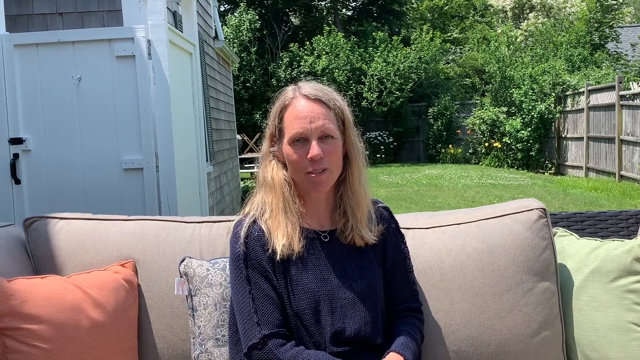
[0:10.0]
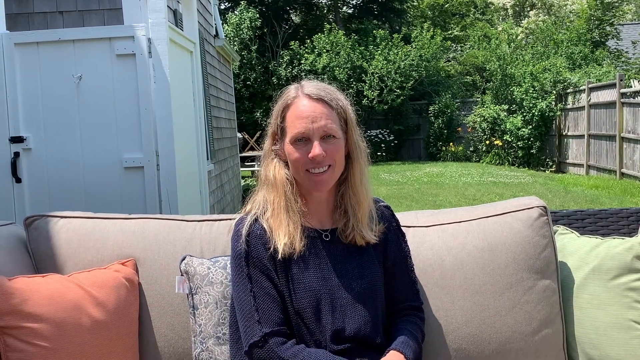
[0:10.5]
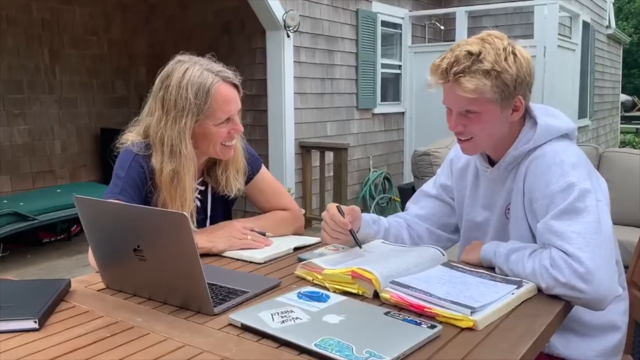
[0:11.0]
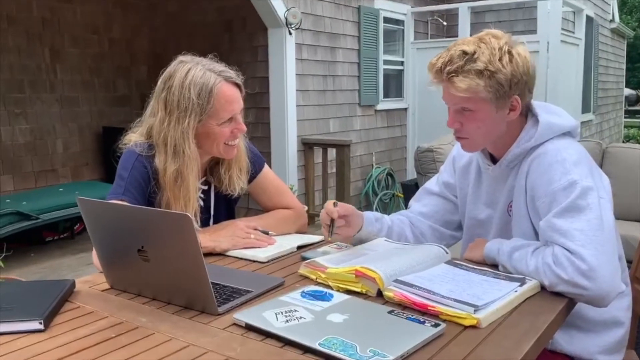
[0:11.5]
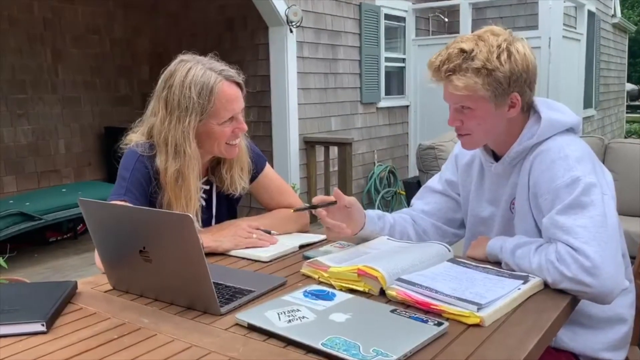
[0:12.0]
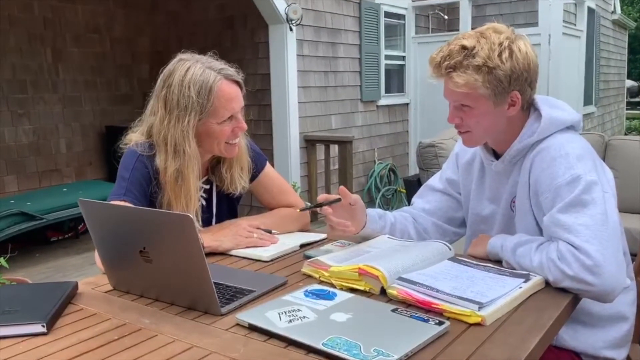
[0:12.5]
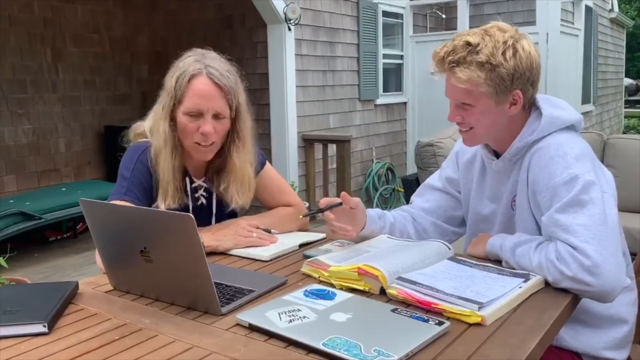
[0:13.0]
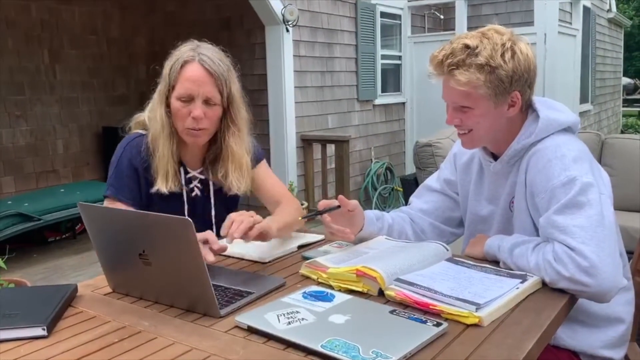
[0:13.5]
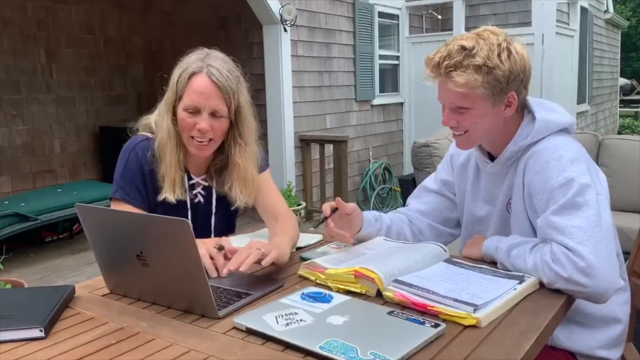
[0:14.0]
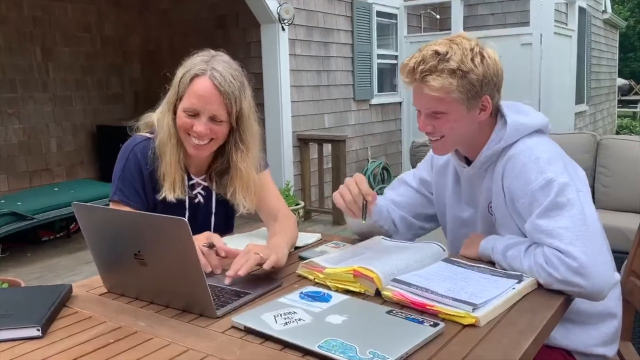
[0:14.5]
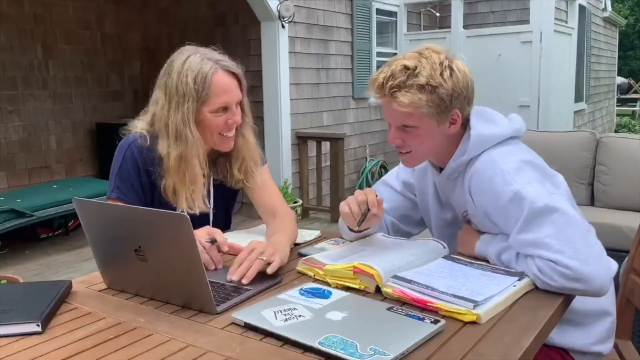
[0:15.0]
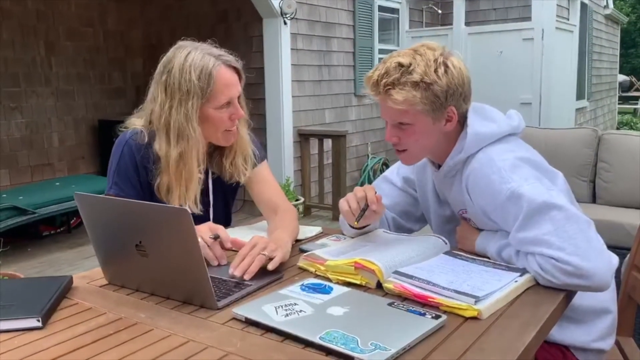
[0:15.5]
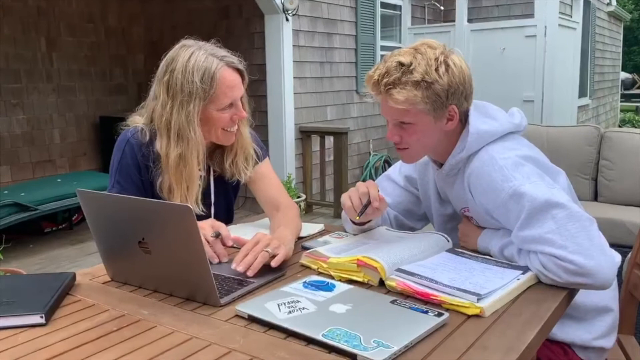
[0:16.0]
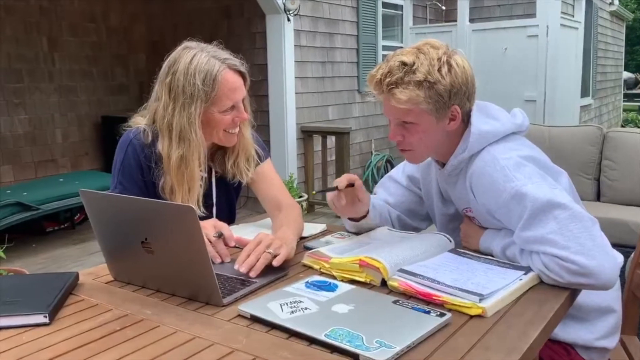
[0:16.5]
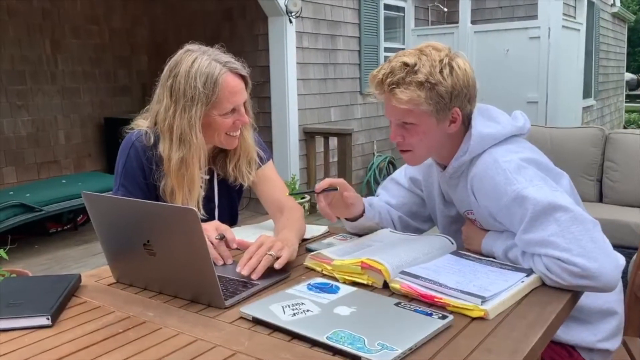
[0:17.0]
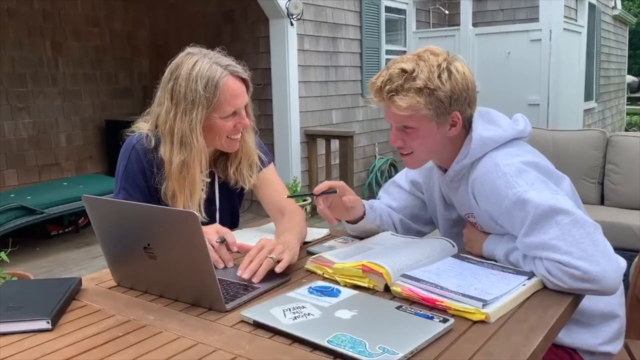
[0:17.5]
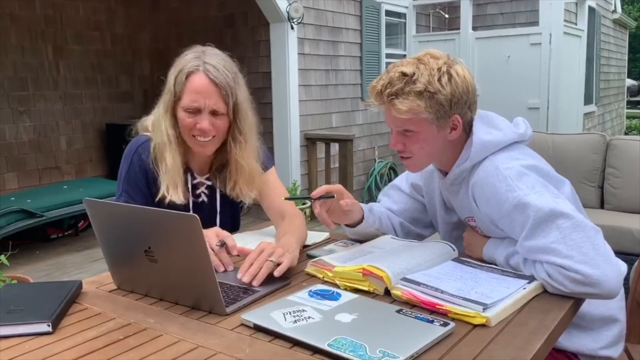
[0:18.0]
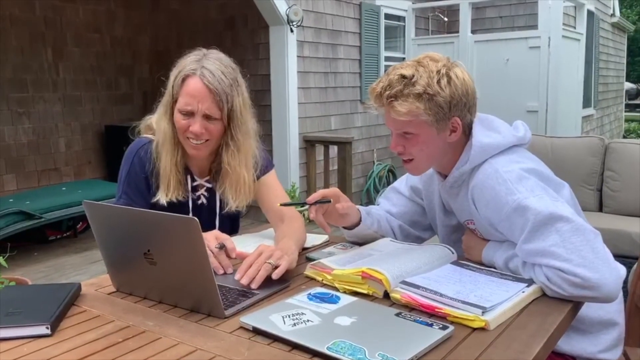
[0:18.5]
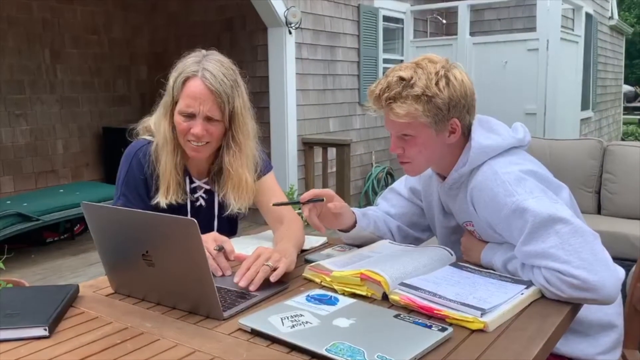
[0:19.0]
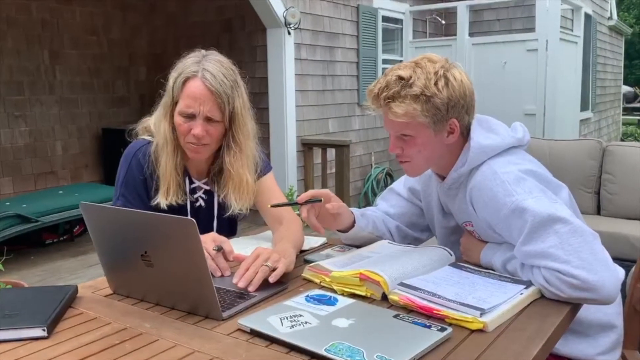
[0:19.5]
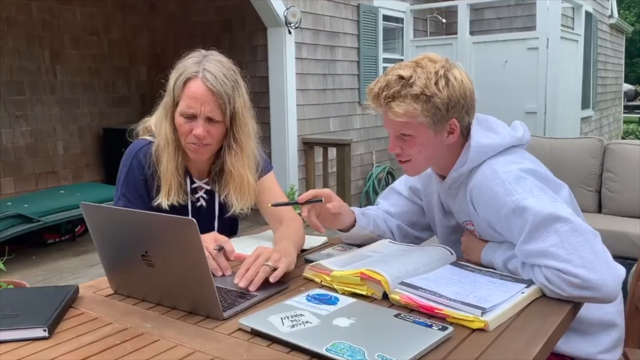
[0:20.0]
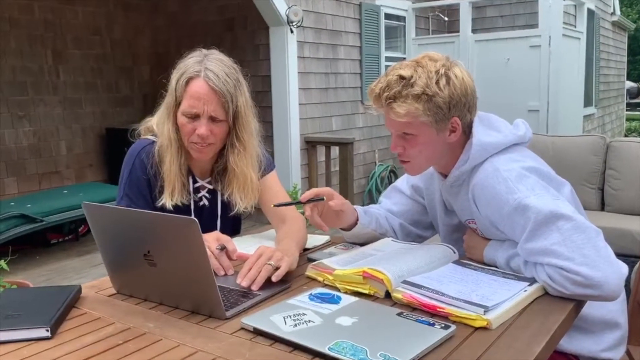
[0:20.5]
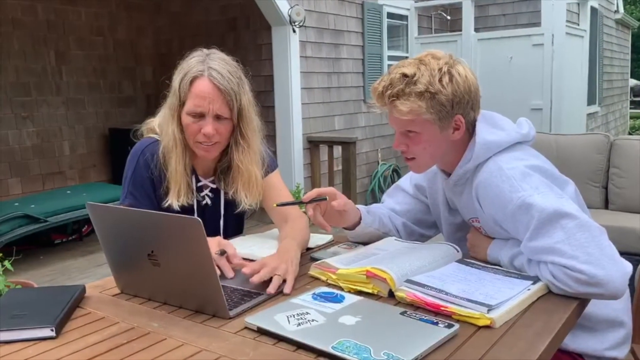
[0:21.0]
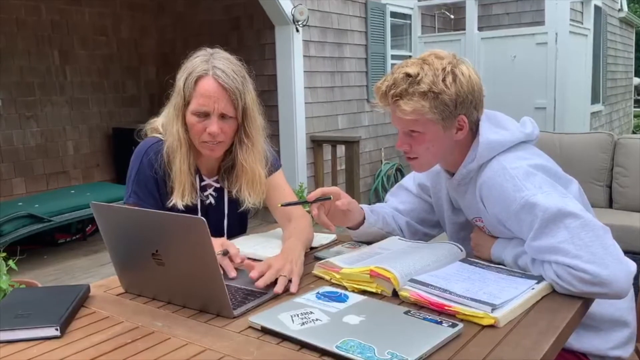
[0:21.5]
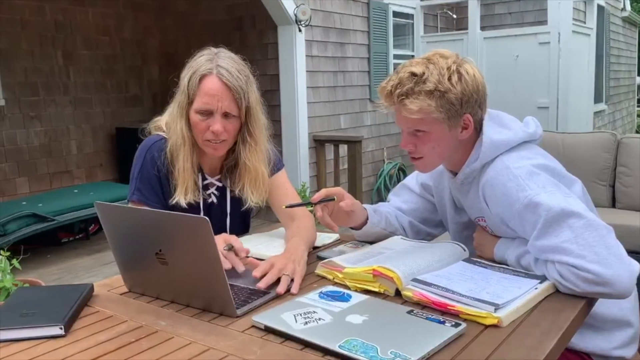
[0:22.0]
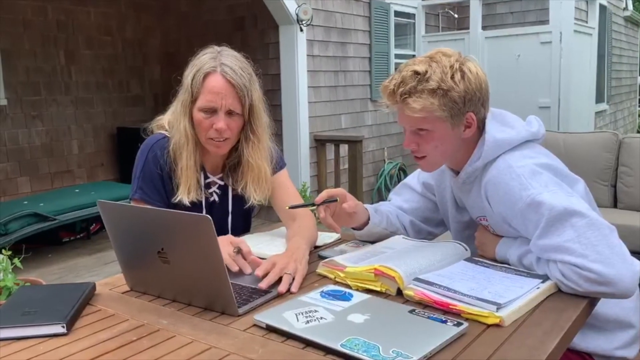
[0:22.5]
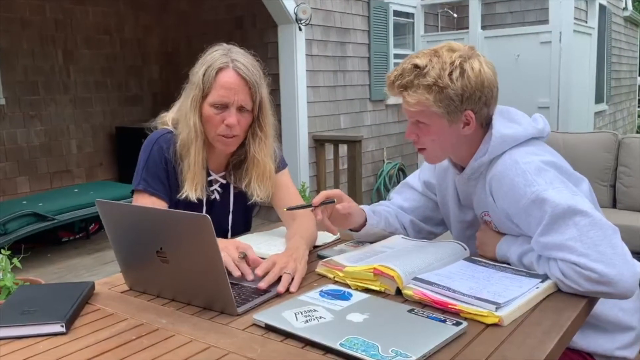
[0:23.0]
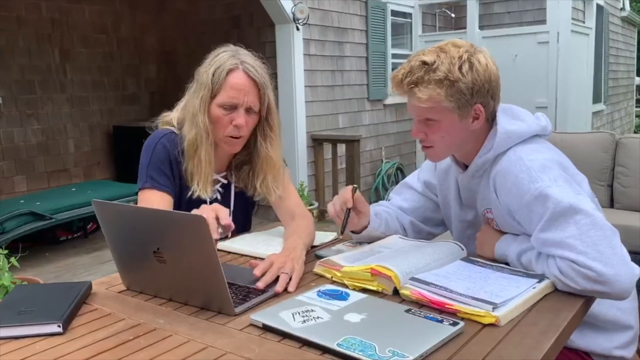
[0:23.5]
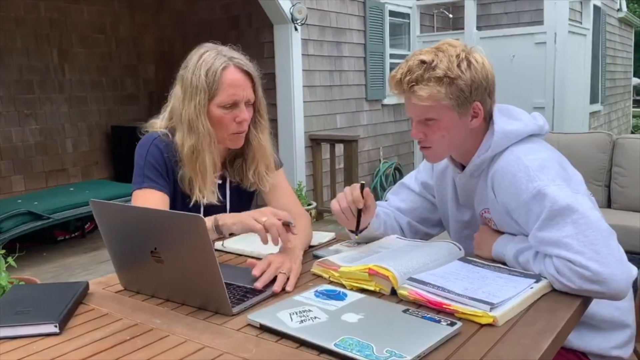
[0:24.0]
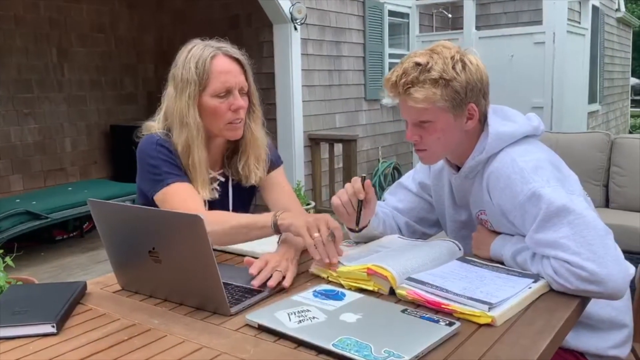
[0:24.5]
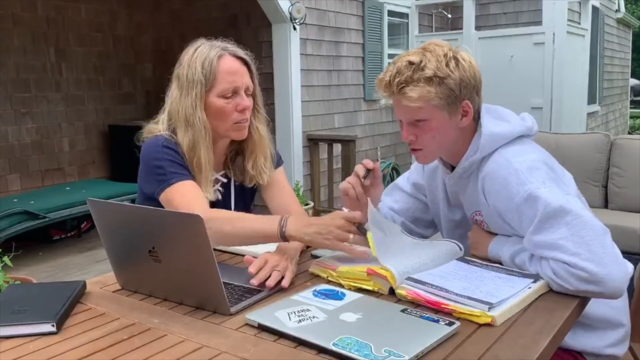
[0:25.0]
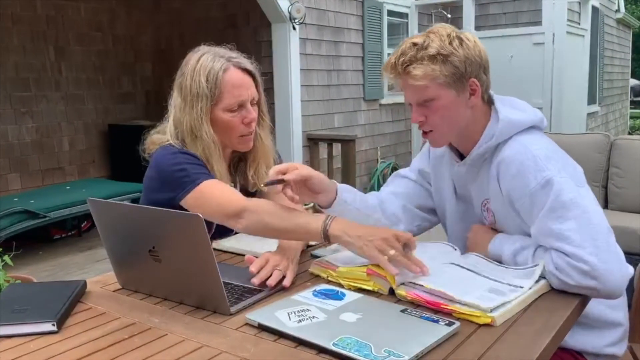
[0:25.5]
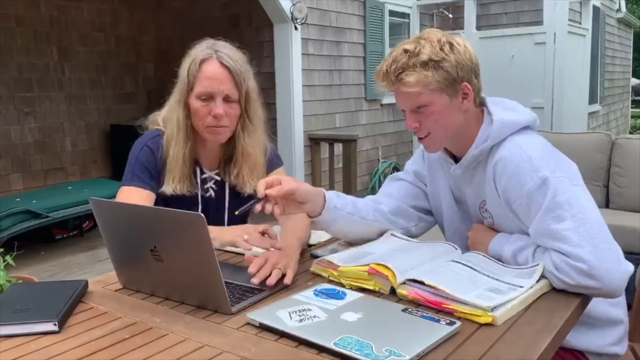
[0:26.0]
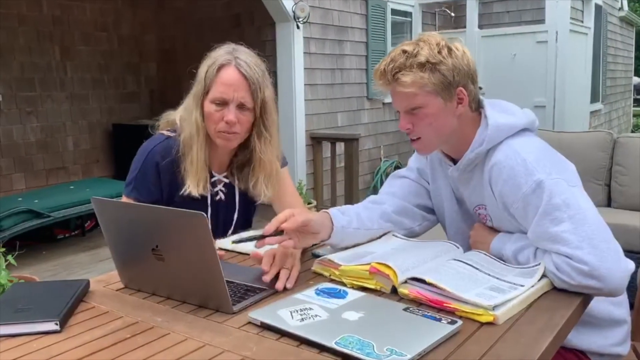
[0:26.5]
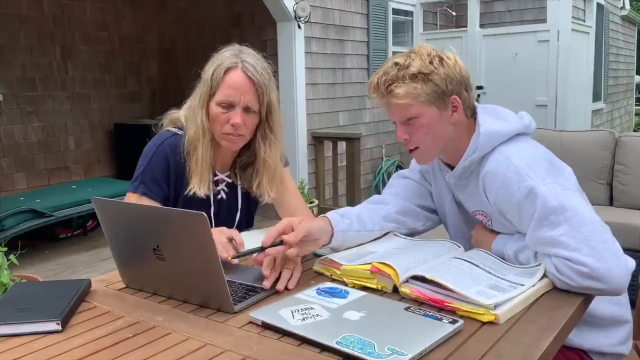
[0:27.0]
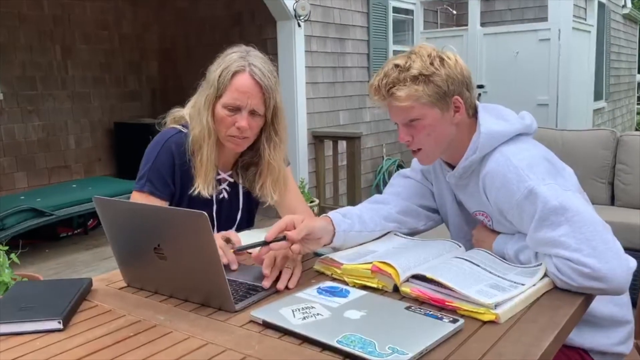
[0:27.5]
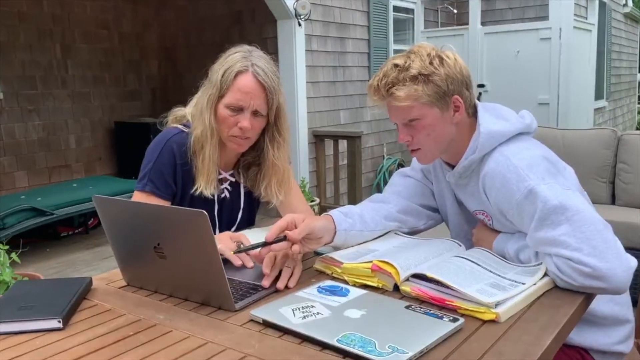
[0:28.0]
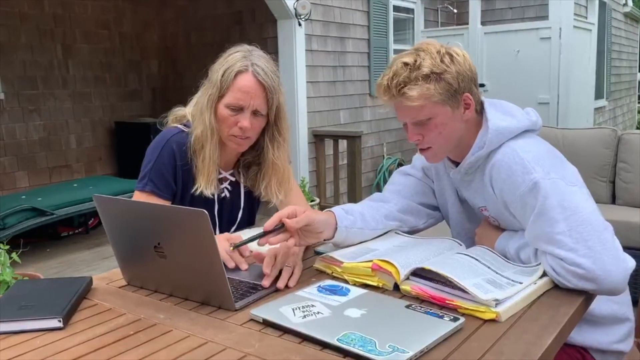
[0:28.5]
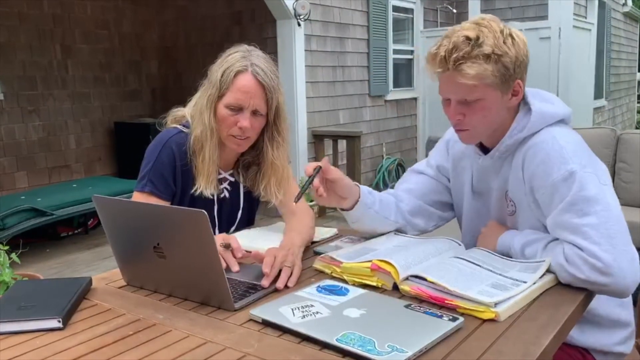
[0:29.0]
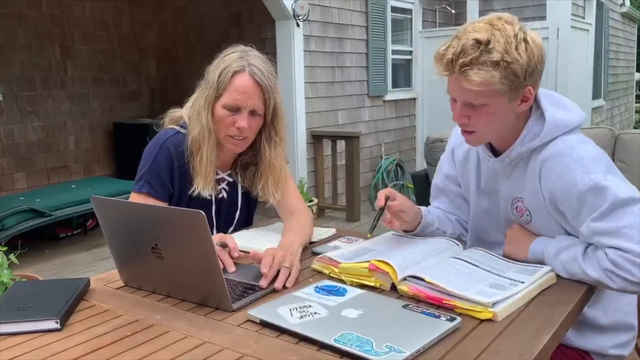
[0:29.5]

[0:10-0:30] The woman sits outside, apparently on a couch placed outdoors, on what looks like a sunny day. A very flat, bright green lawn is in the background, and a house is on the left with a door that might be the main entrance or a backyard entrance; the door has a somewhat rustic handle and a lock. The scene cuts to her sitting with a guy, probably a college student, whom she appears to be tutoring. They are both working on a laptop; the guy seems to be looking at the laptop and pointing out a couple of things. A really big book is in front of him.